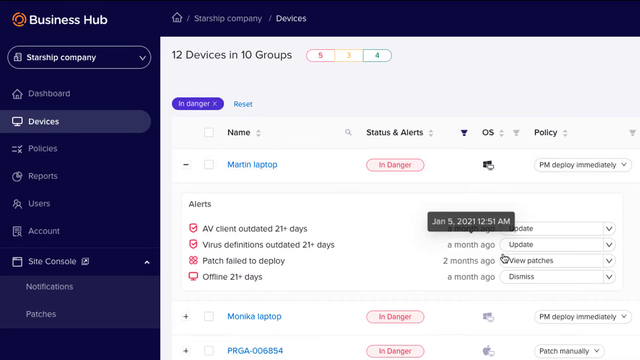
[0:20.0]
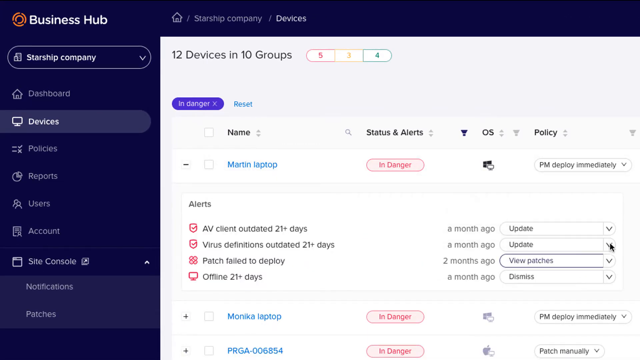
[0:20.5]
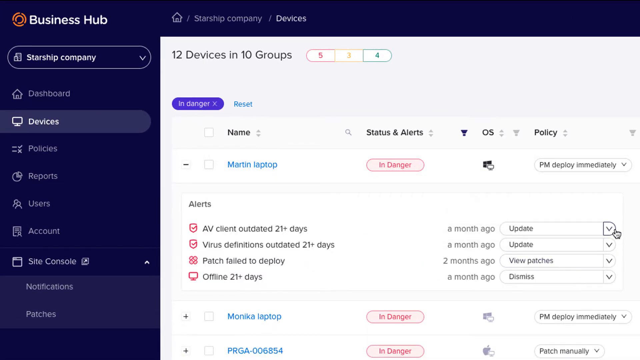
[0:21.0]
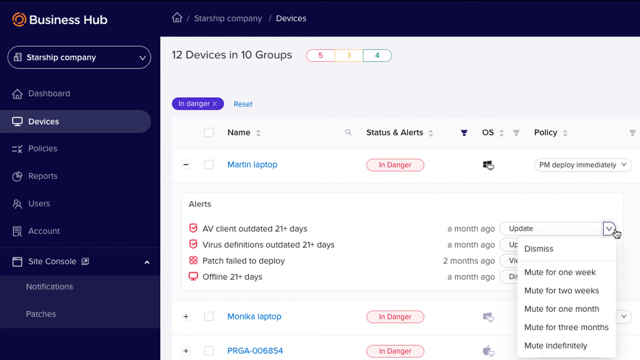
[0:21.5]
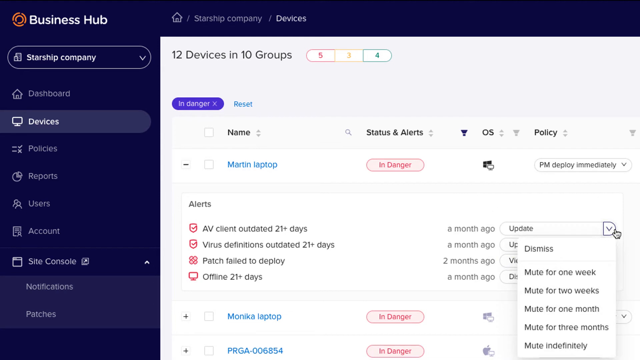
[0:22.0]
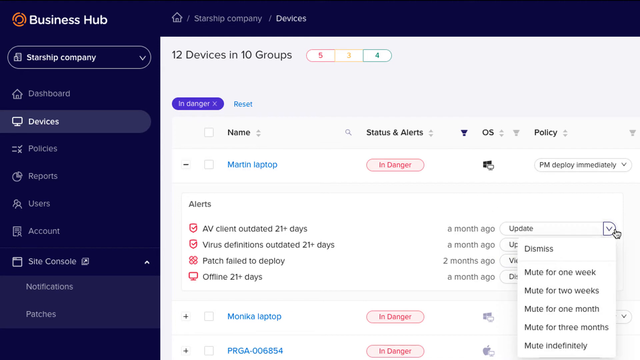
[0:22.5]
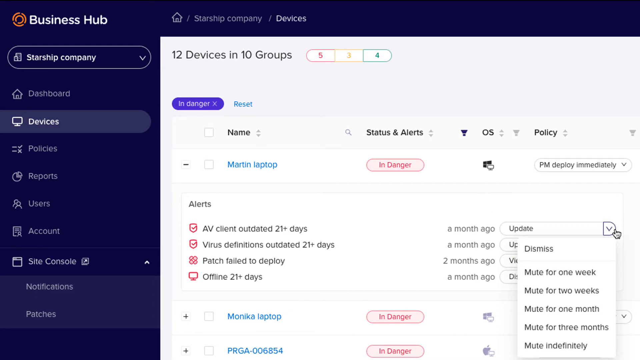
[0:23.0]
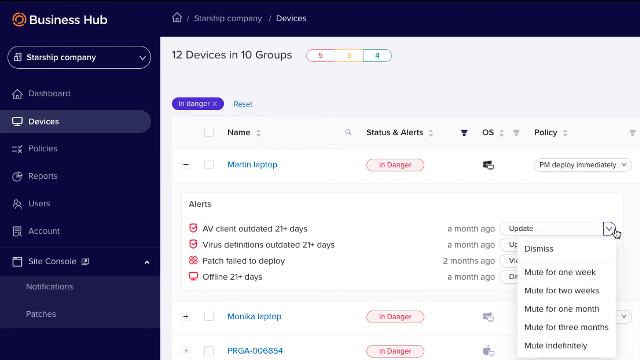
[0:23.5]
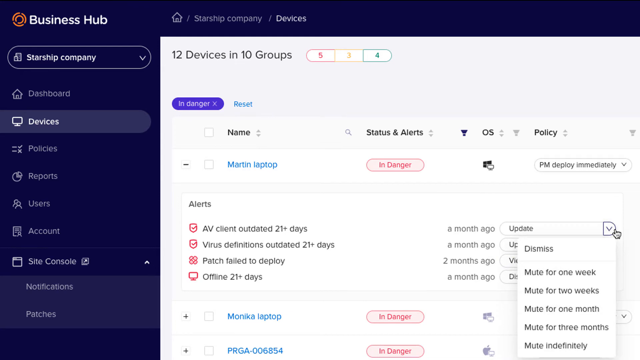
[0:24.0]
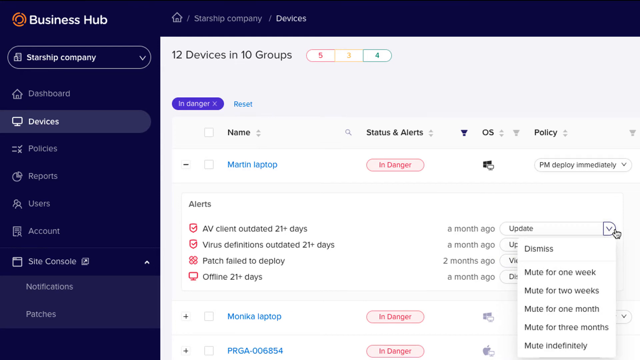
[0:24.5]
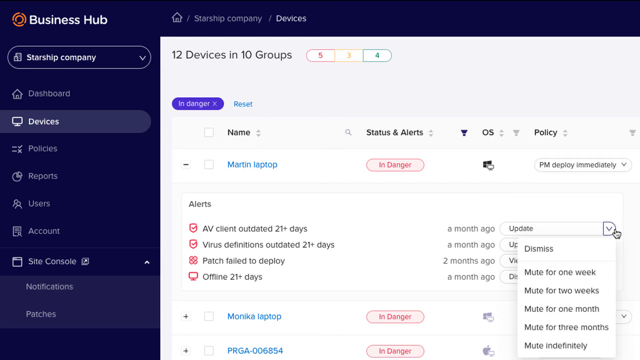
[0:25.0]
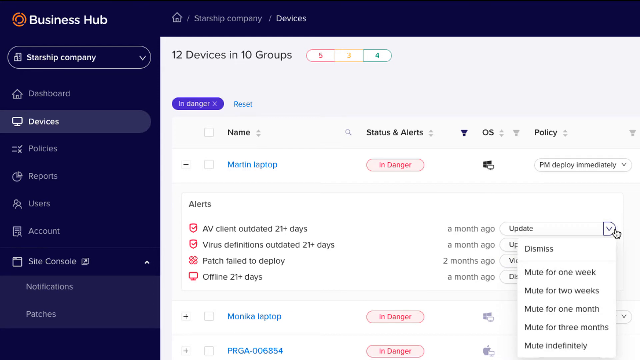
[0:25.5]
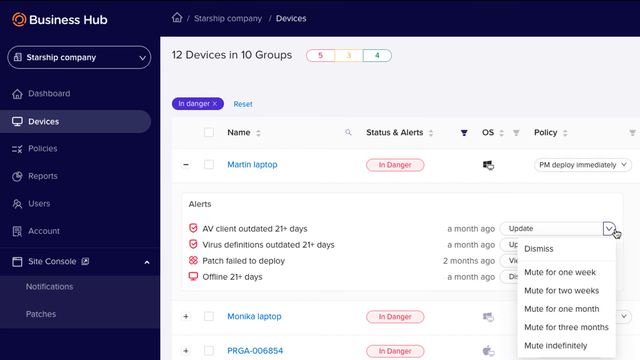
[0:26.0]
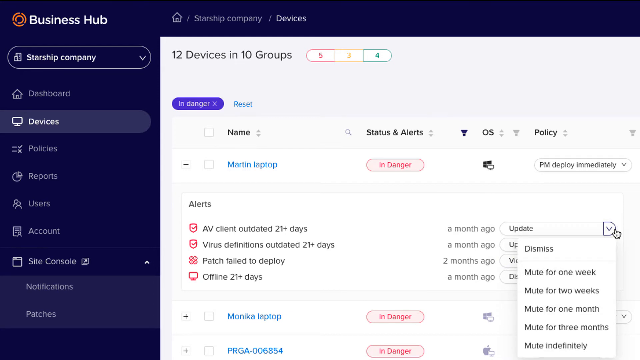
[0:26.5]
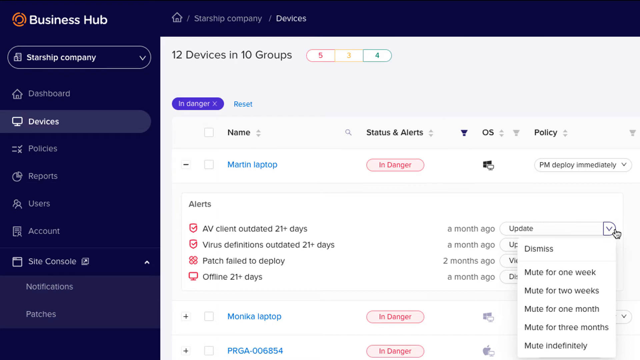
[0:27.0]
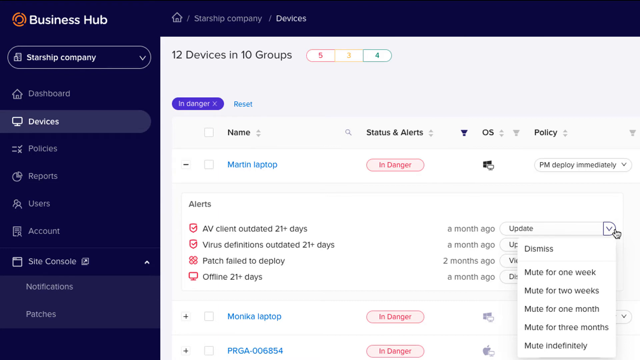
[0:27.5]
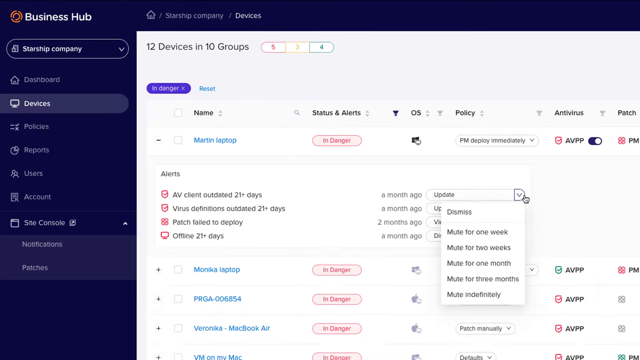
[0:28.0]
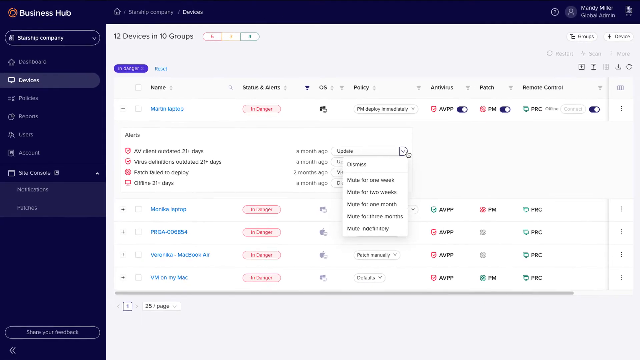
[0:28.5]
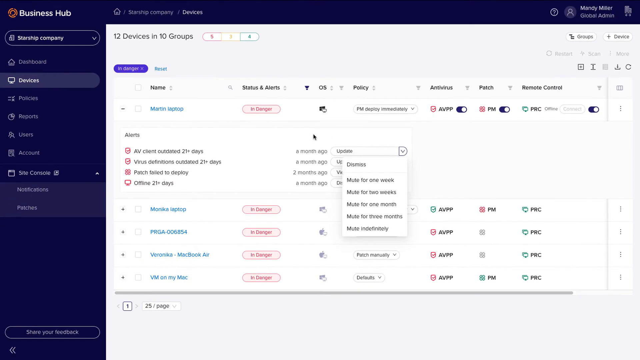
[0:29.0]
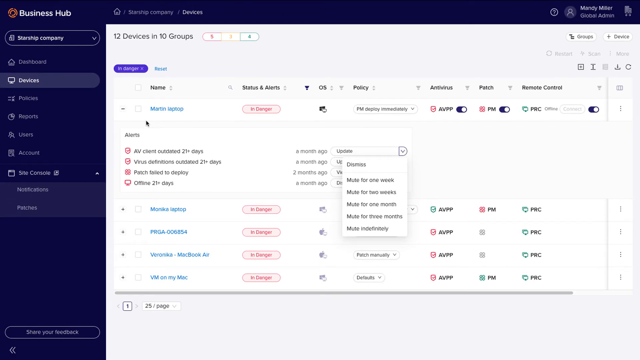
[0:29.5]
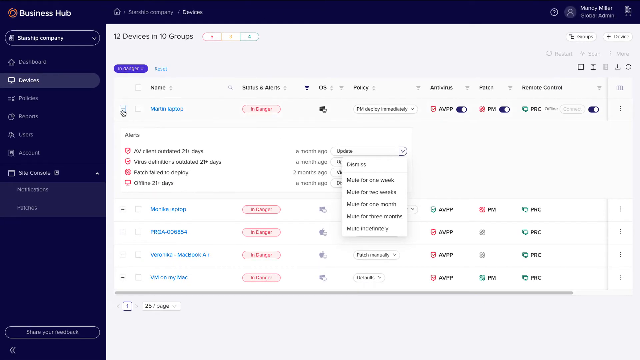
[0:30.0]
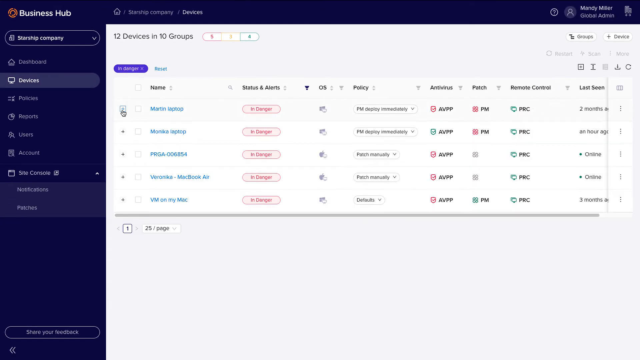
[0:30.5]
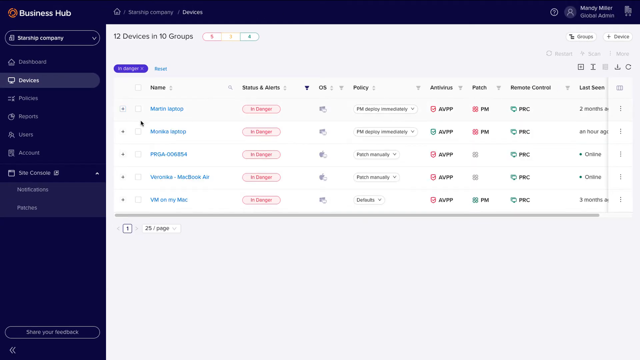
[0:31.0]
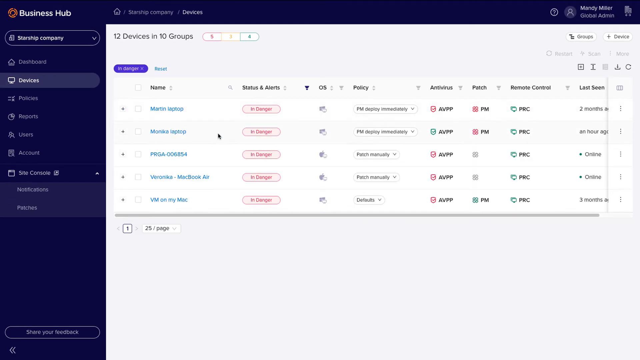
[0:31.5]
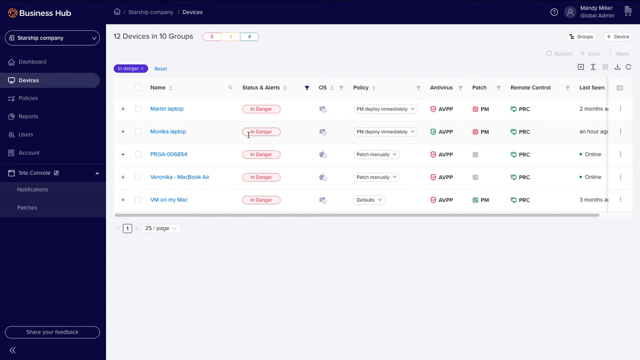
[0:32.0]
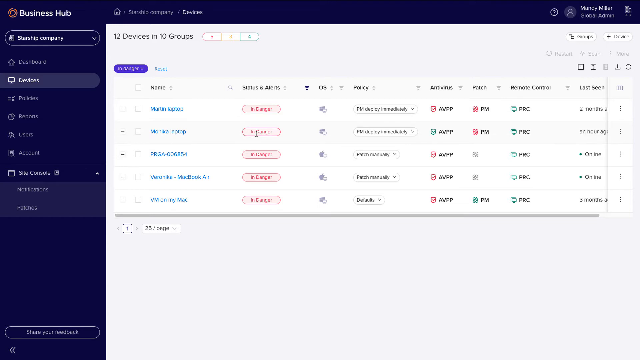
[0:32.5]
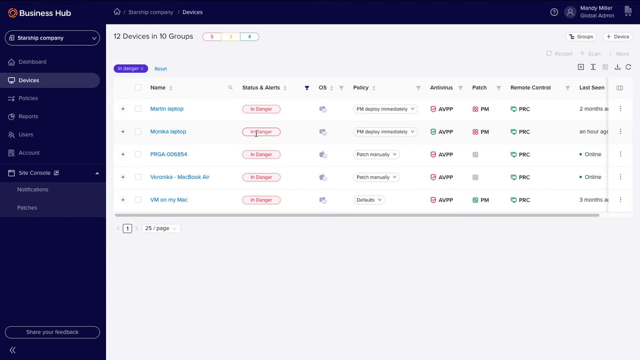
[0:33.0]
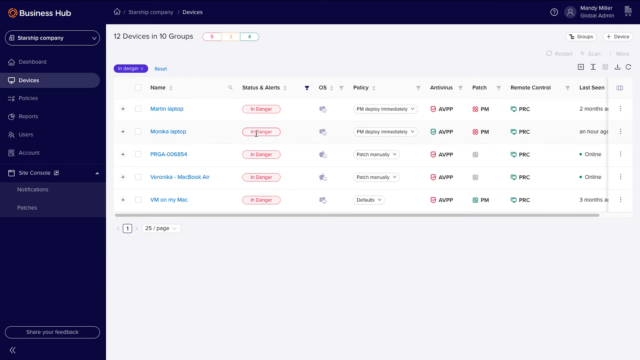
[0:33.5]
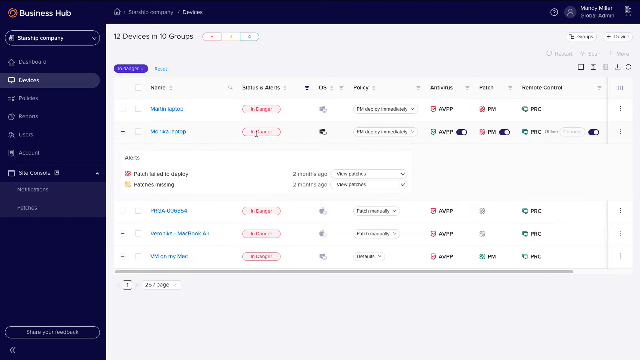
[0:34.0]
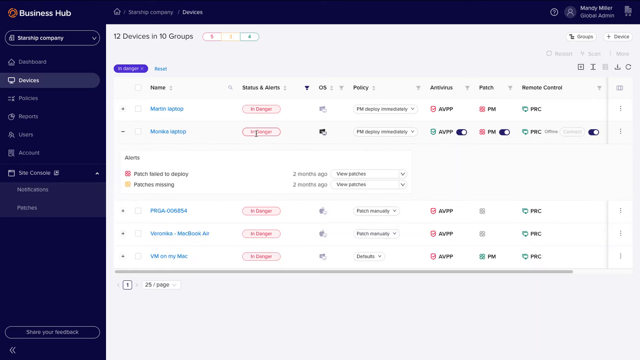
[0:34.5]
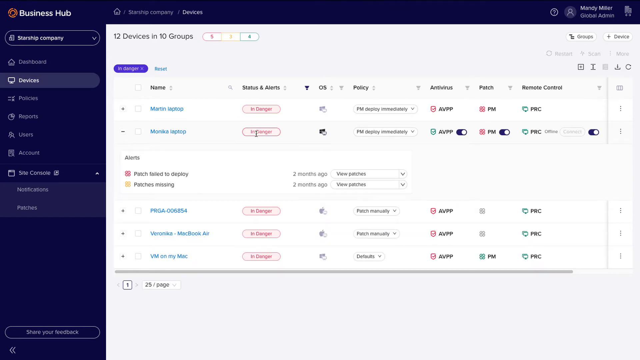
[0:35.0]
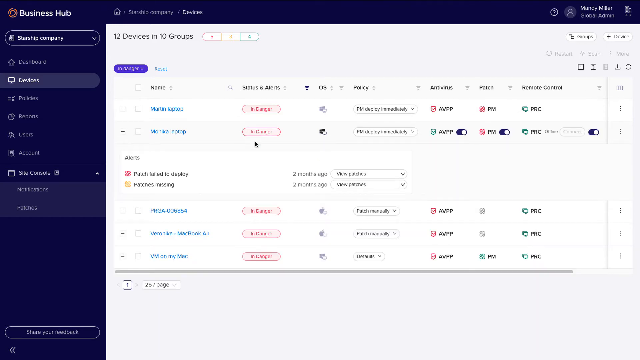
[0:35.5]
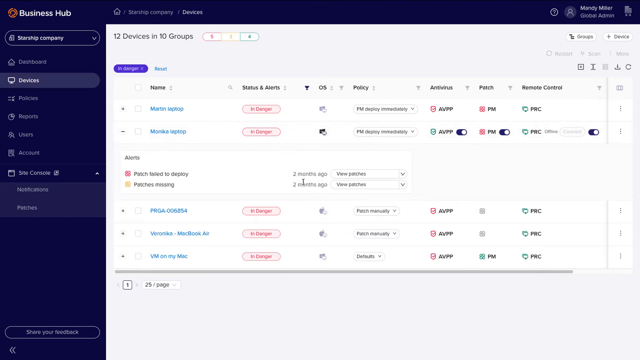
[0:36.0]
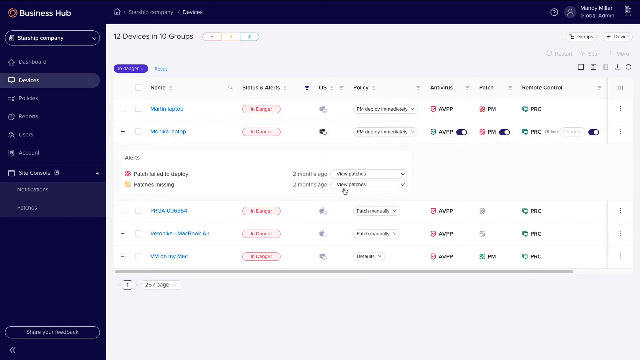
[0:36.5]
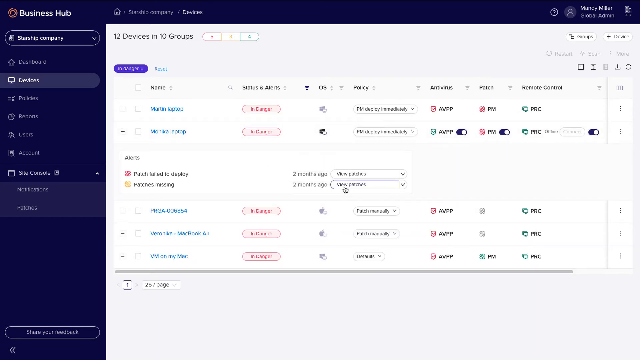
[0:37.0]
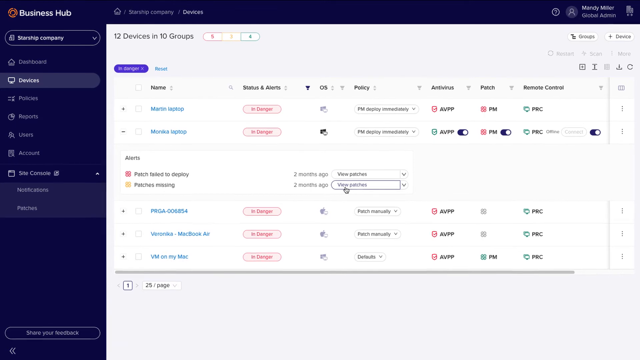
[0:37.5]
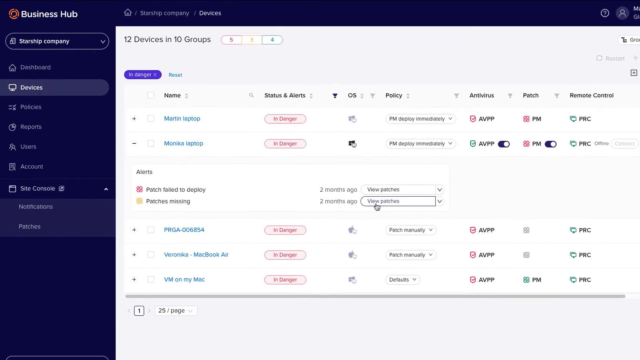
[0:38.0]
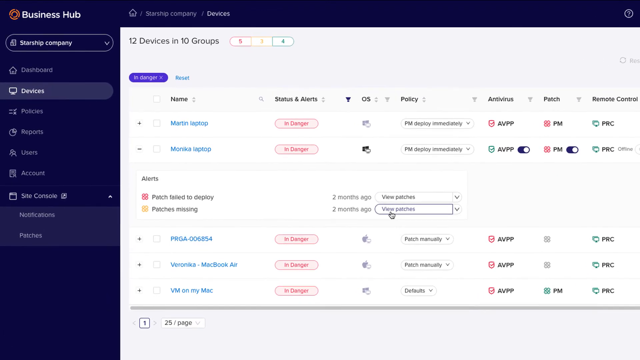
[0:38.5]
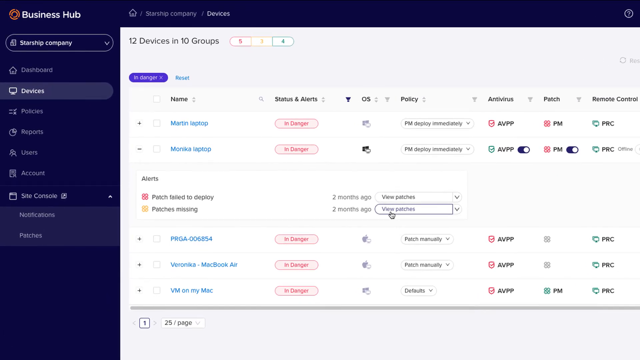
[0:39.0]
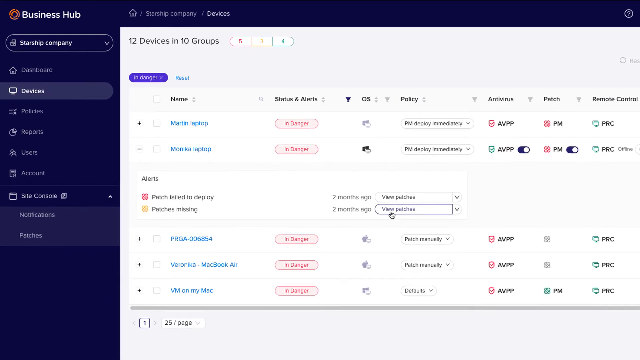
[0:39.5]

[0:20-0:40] The Business Hub is shown again, with a view of how the business is operating. It refers to 12 devices in 10 groups and a dashboard with a search option. A policy is visible, with clearly displayed dates.